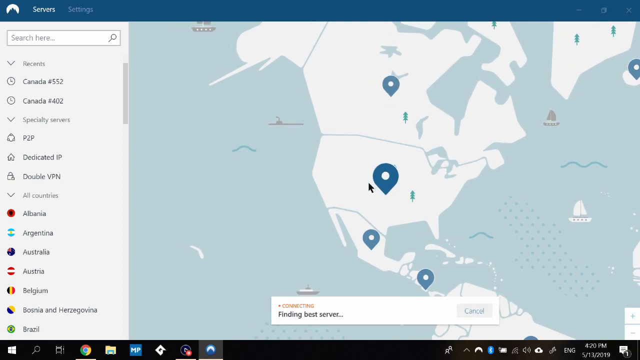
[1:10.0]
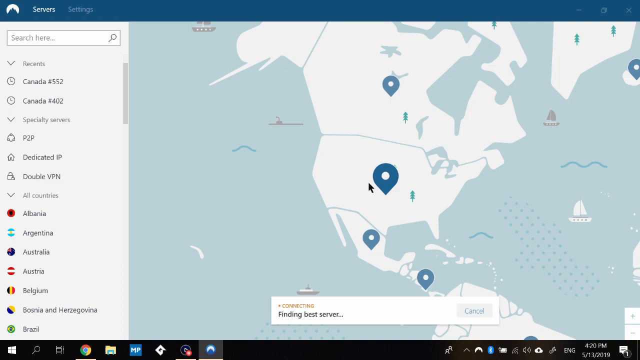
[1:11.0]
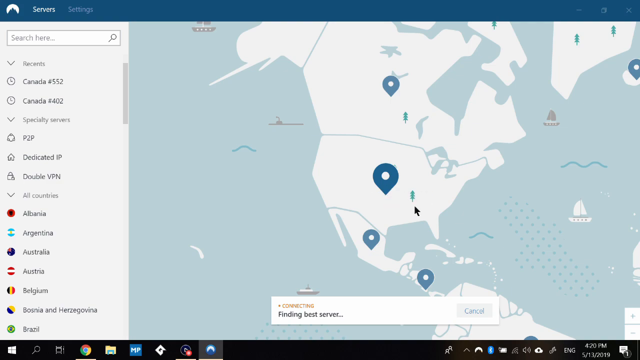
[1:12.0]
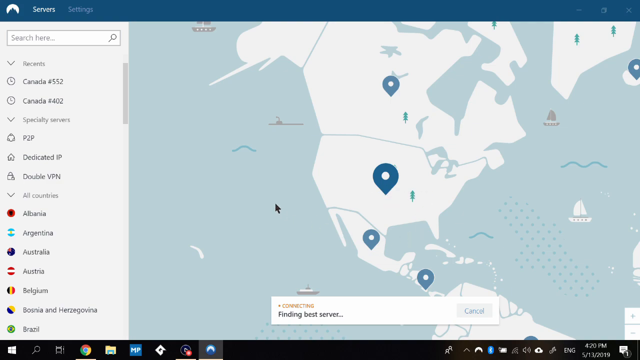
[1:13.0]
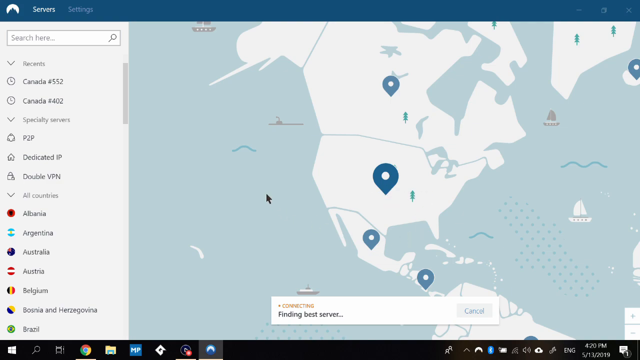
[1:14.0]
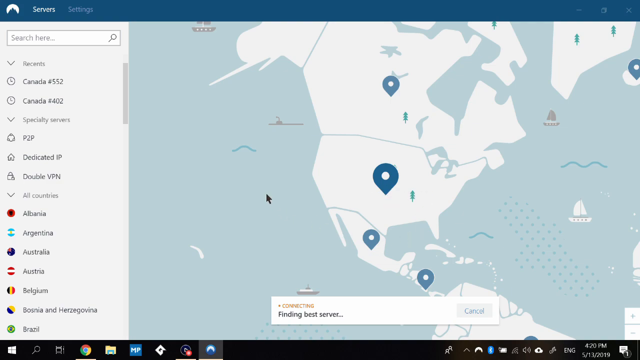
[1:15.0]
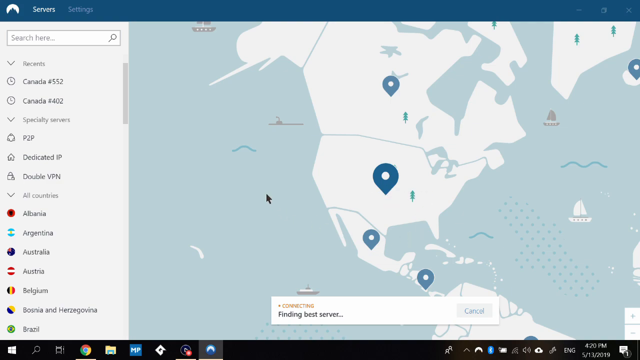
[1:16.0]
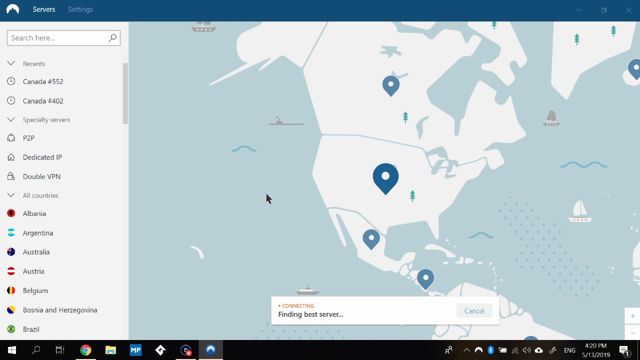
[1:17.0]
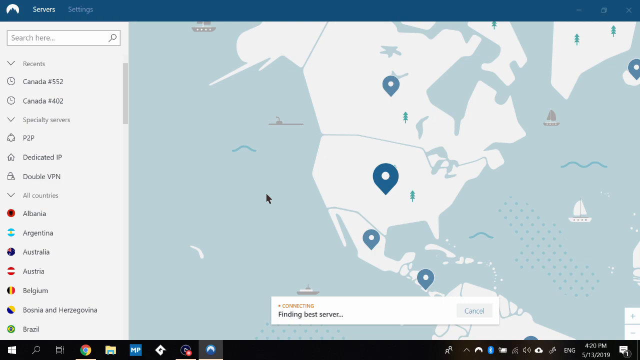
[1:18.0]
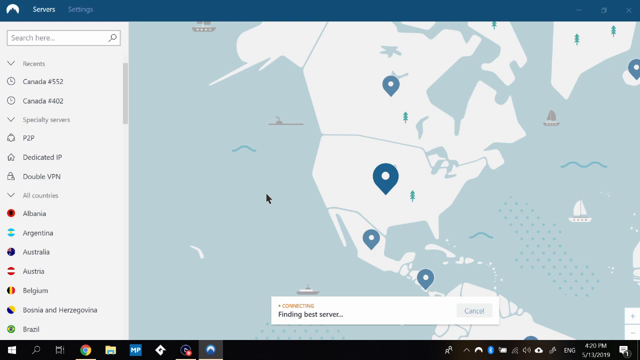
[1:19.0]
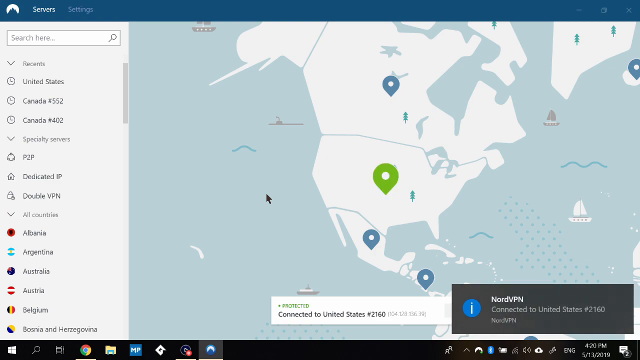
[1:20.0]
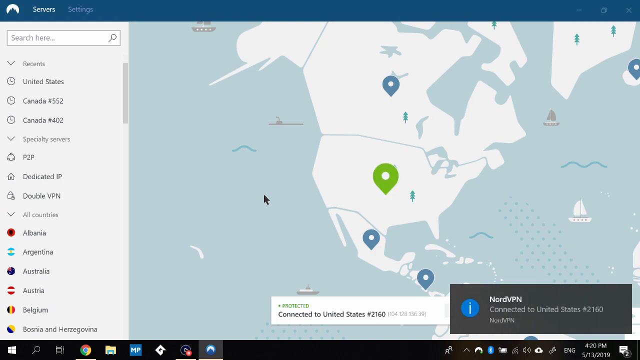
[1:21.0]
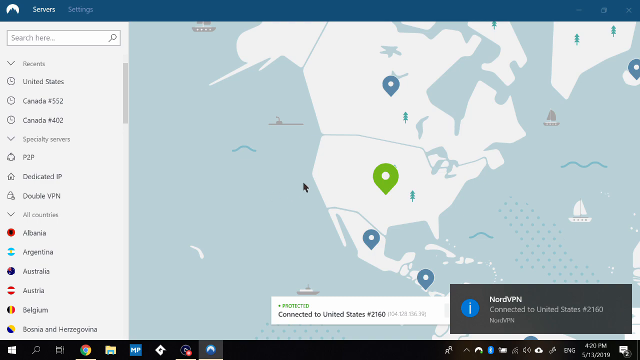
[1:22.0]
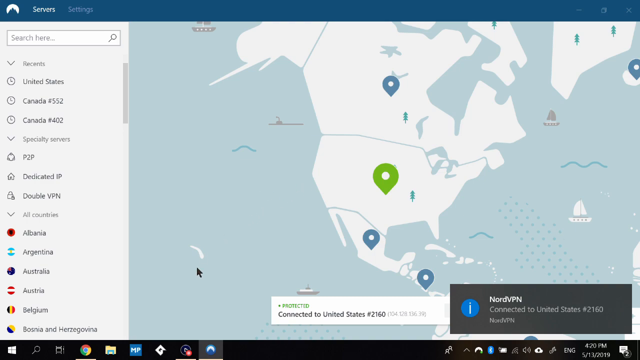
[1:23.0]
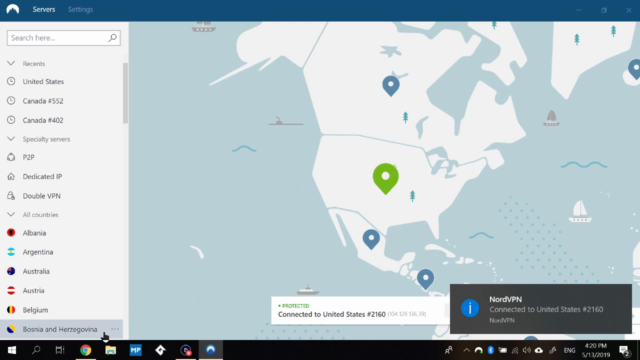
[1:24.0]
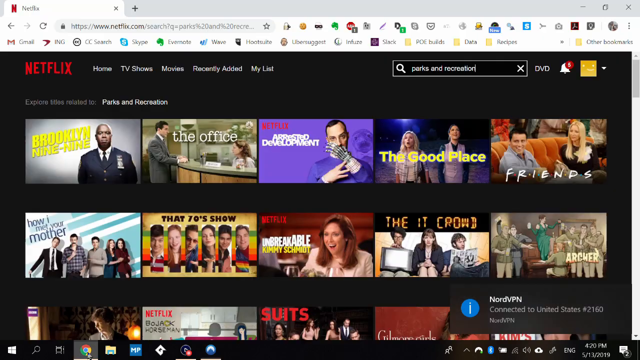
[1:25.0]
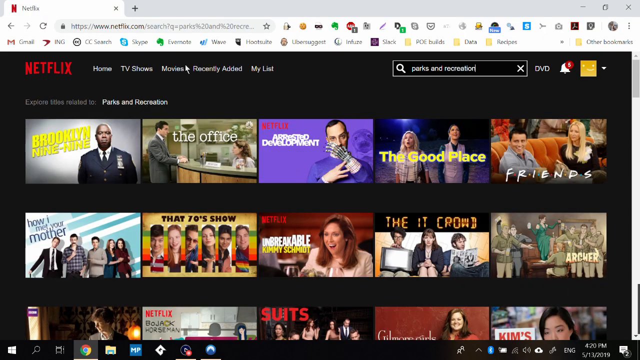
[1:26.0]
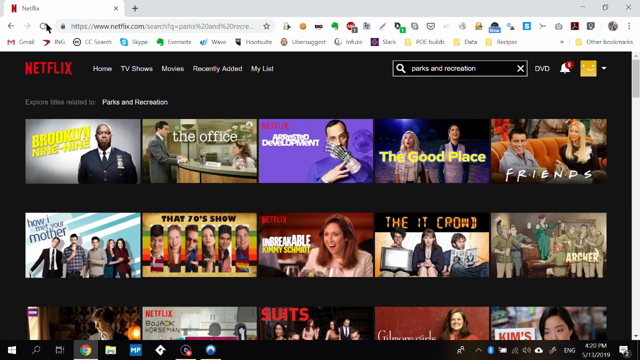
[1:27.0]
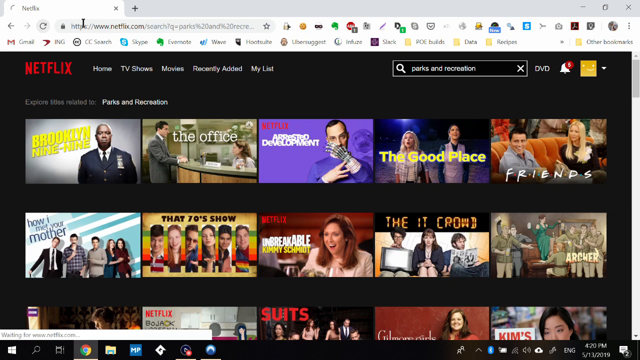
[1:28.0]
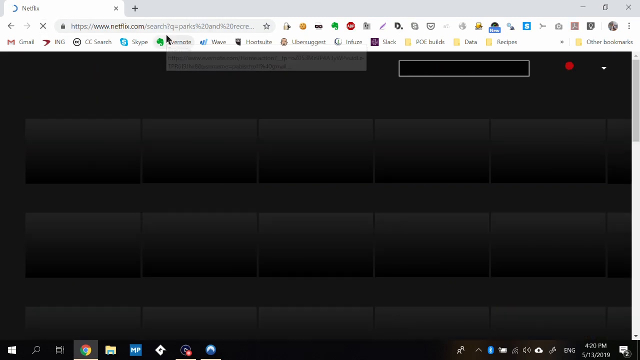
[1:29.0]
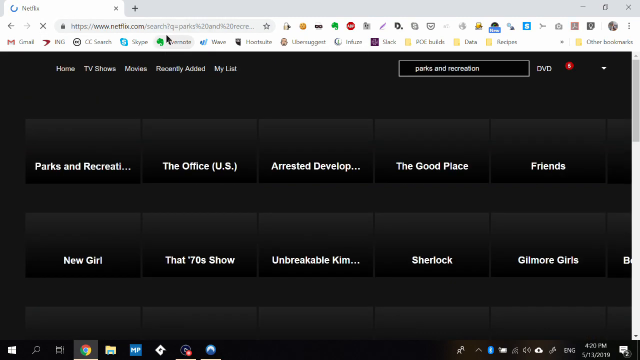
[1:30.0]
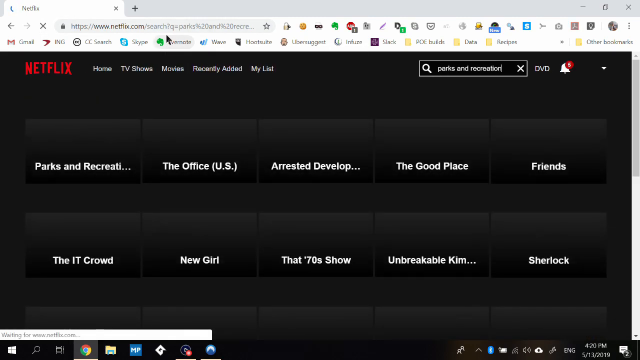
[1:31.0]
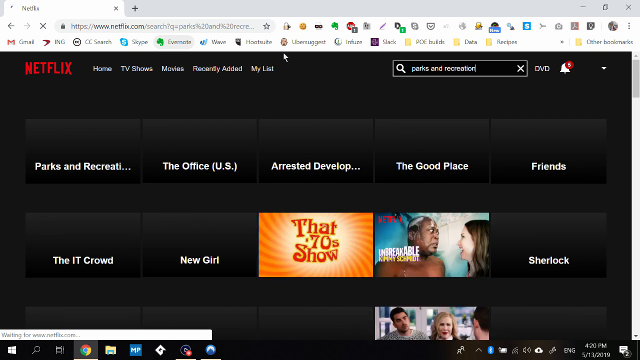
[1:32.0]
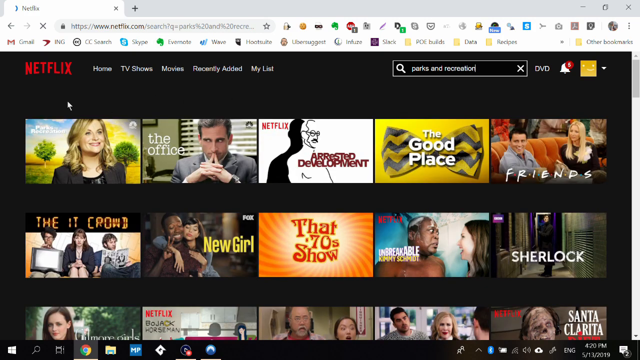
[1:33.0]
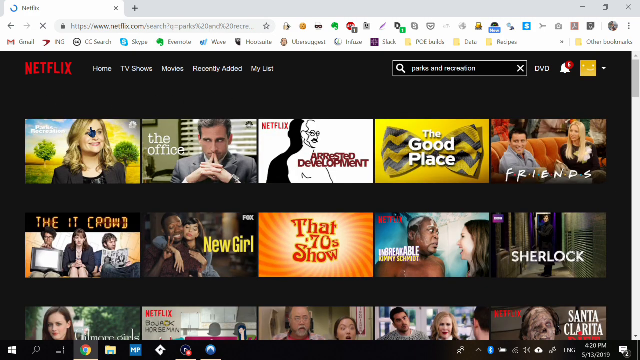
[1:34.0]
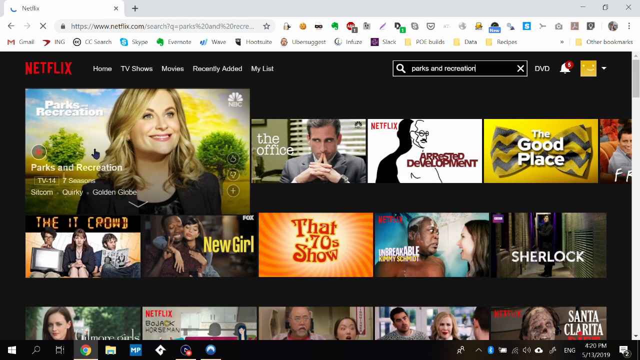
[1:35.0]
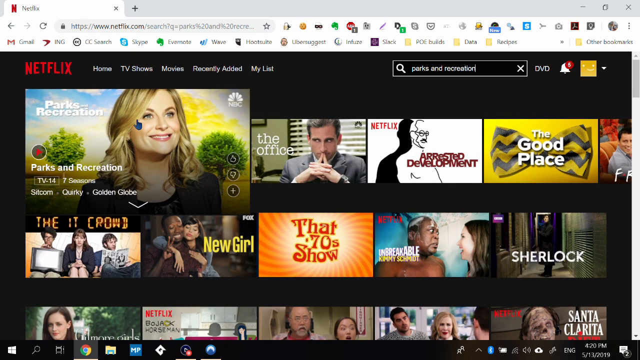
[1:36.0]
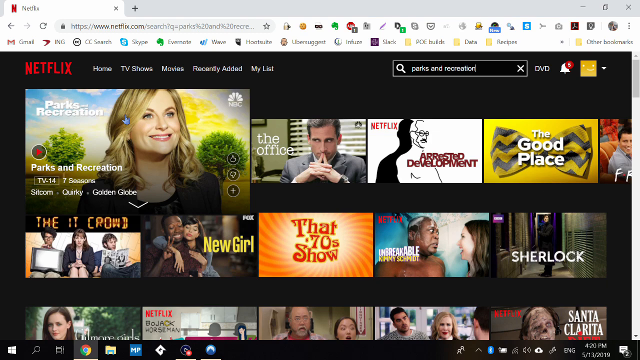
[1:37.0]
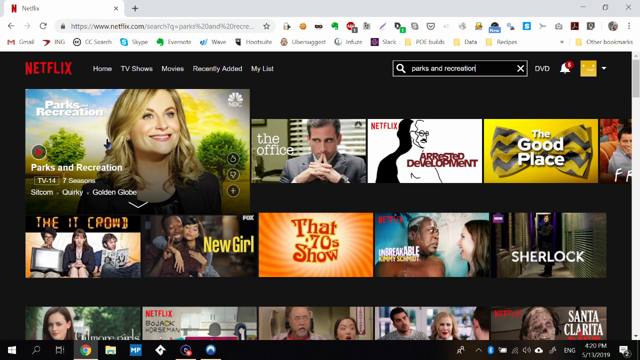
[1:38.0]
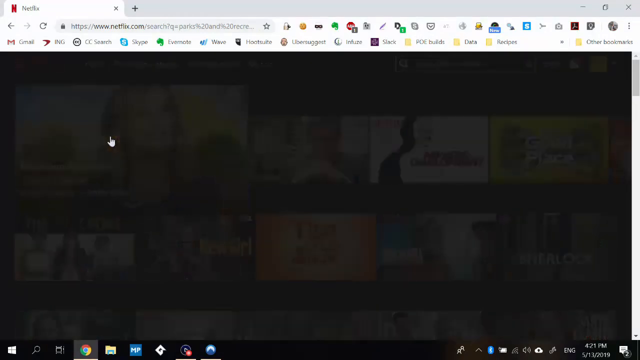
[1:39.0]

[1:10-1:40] A screen shows a map with a pinpoint marking a country, along with a search section, servers and settings. The servers section is open. The mouse clicks on one of the pinpoints, and it shows a VPN message: "NADA VPN connected to United States", with the number 2160. The user goes back to the Netflix homepage and clicks the refresh button, after which the movie being searched for apparently appears.